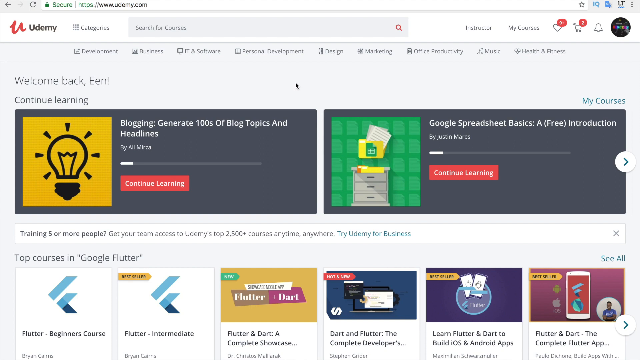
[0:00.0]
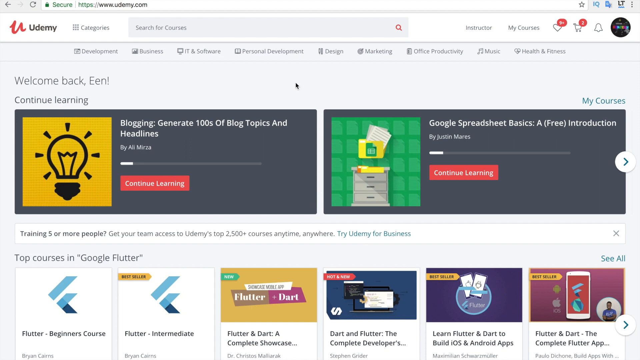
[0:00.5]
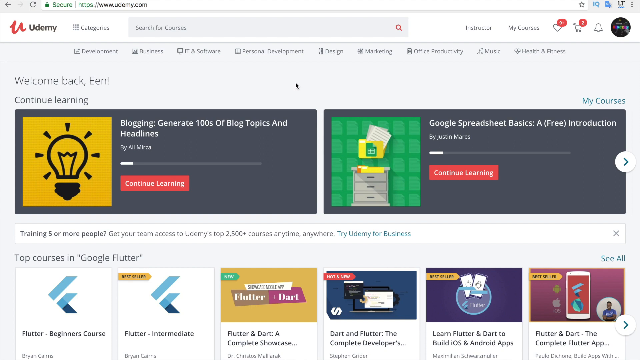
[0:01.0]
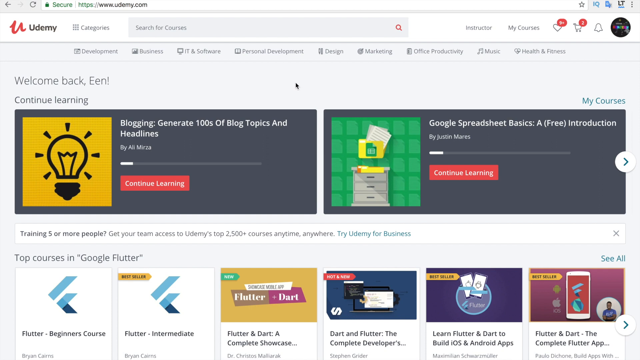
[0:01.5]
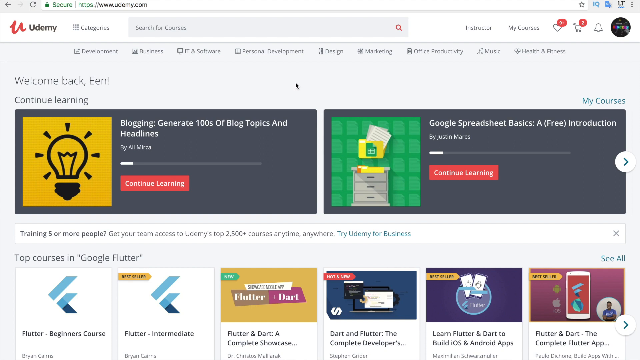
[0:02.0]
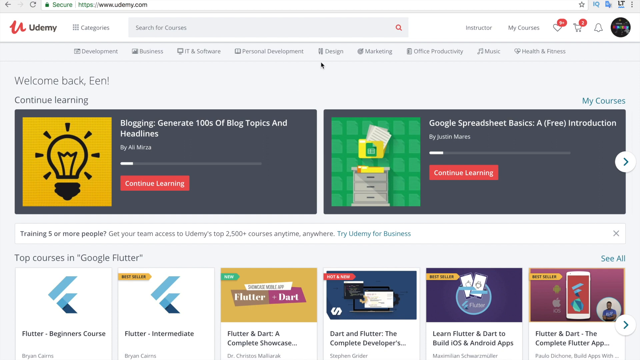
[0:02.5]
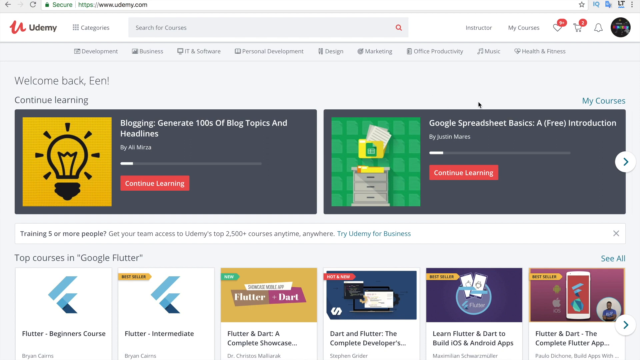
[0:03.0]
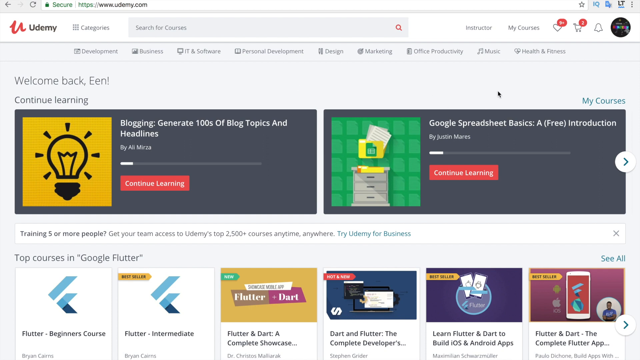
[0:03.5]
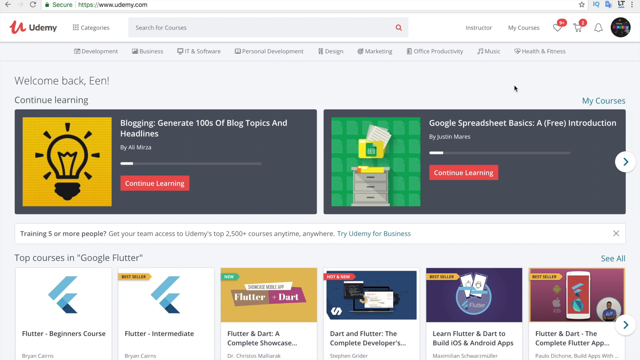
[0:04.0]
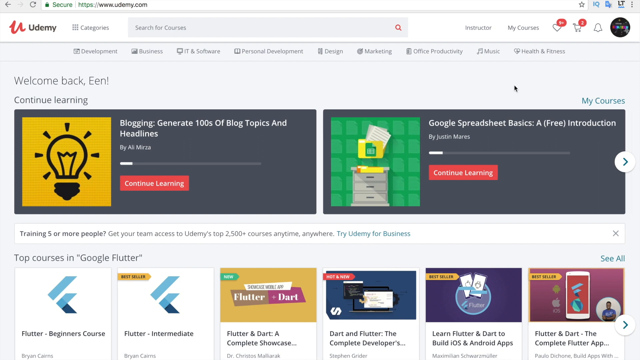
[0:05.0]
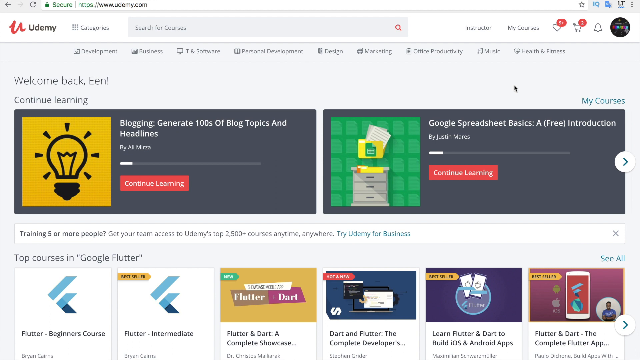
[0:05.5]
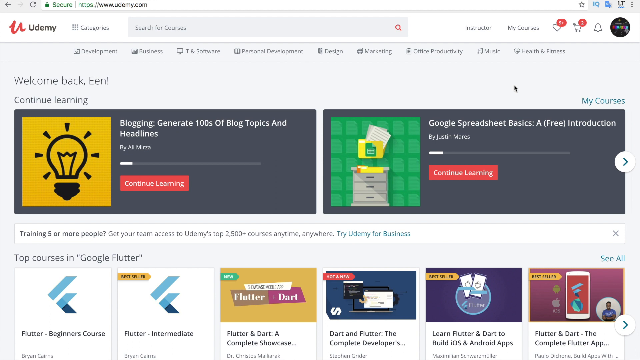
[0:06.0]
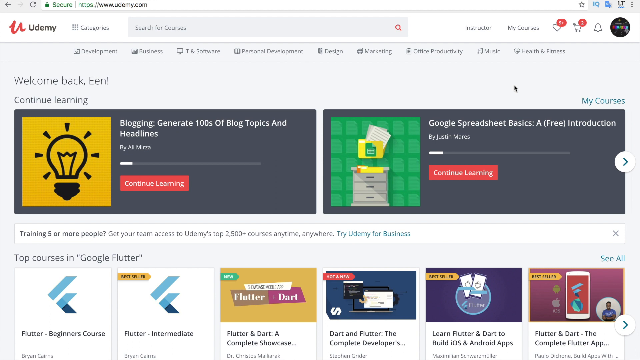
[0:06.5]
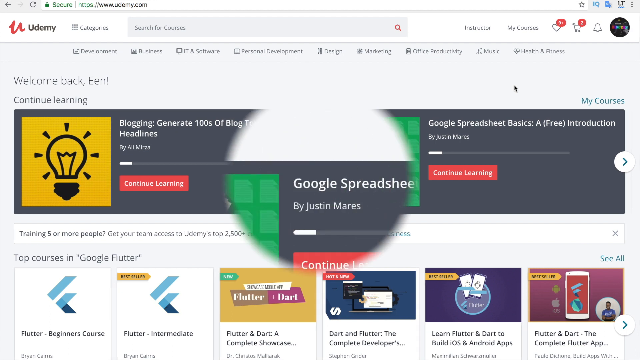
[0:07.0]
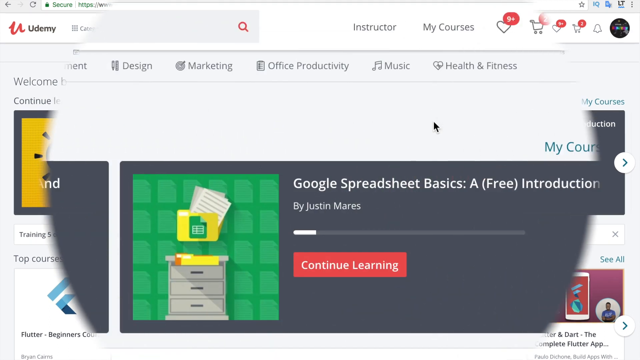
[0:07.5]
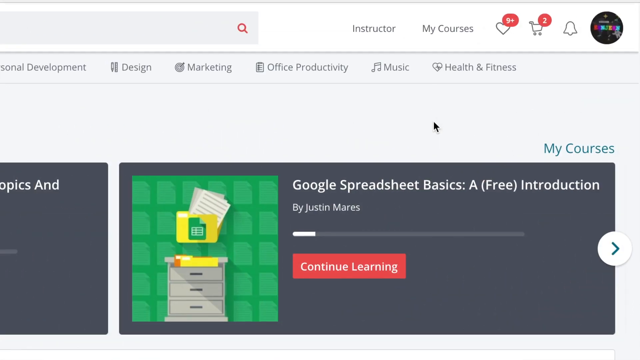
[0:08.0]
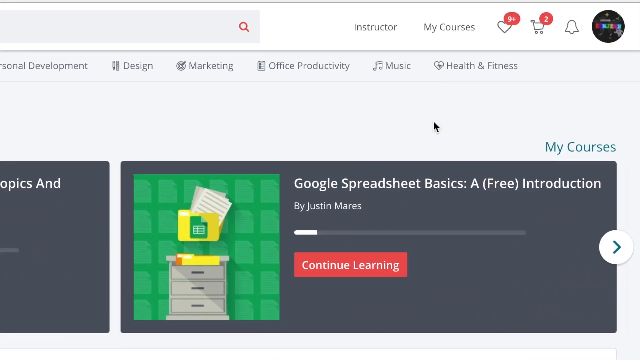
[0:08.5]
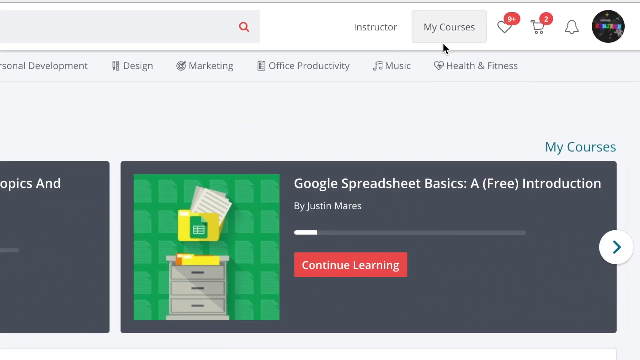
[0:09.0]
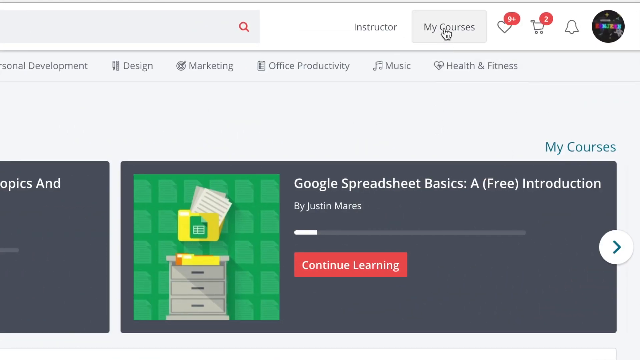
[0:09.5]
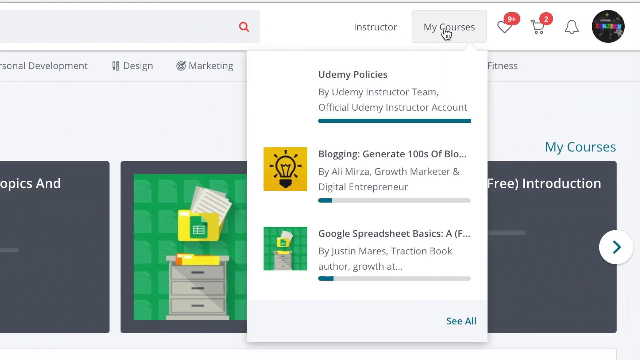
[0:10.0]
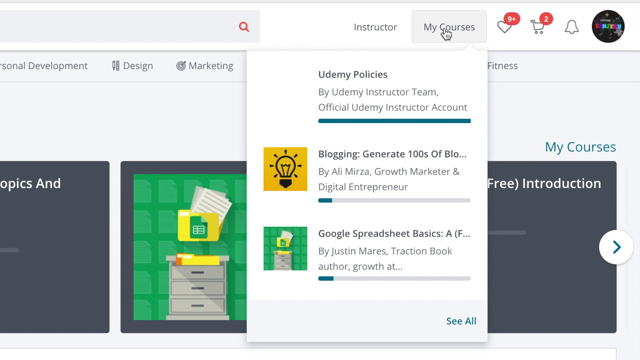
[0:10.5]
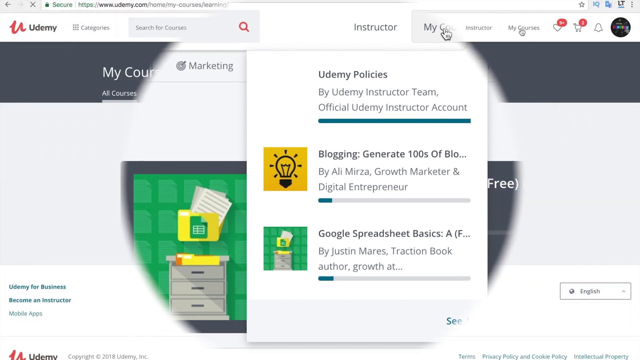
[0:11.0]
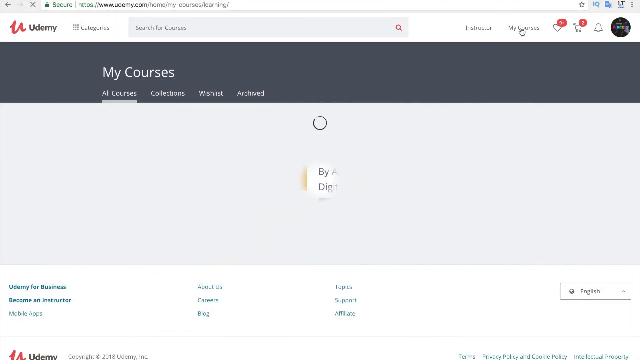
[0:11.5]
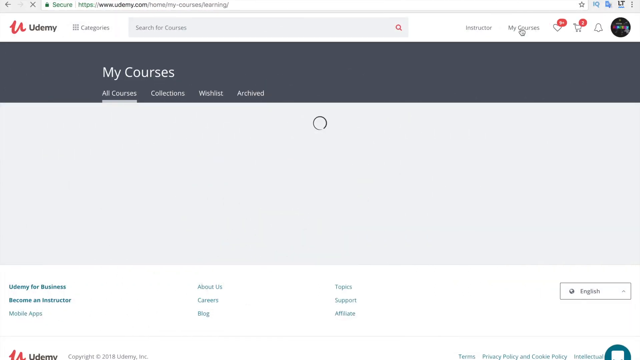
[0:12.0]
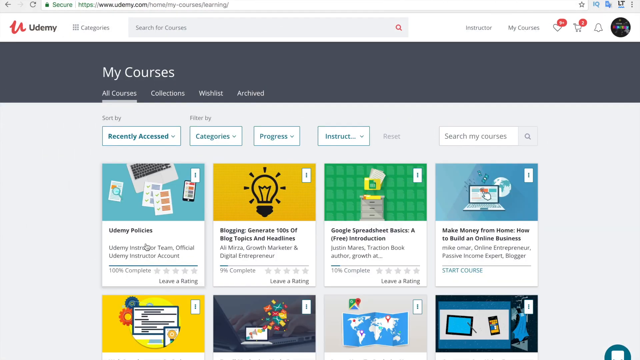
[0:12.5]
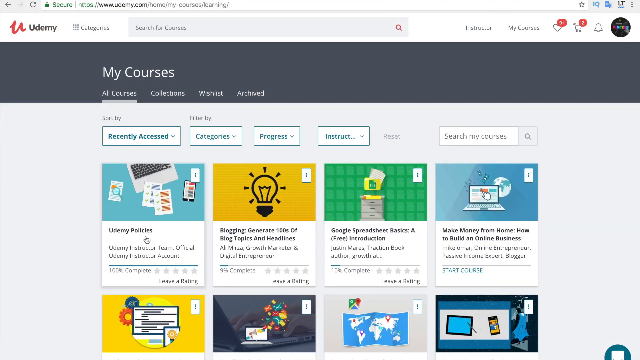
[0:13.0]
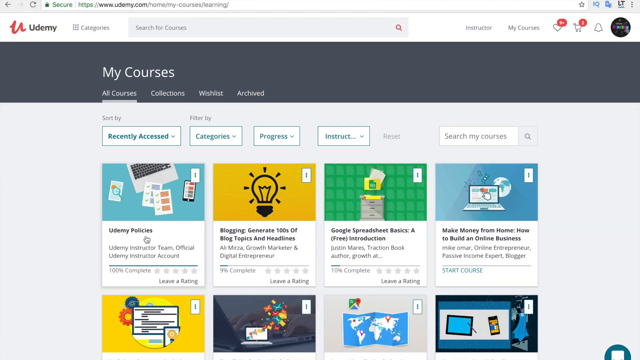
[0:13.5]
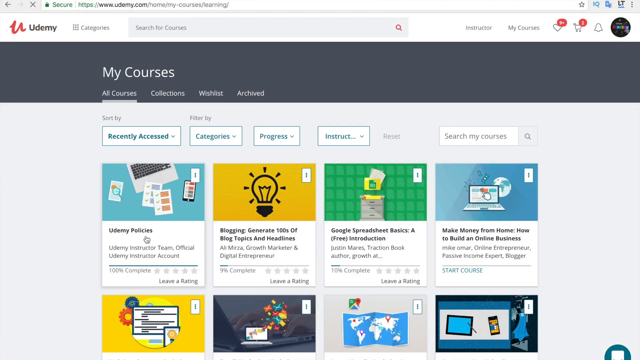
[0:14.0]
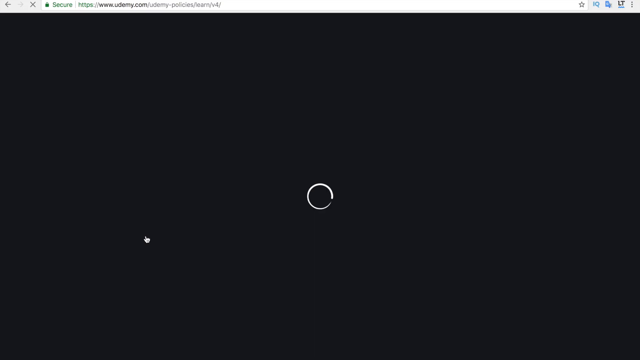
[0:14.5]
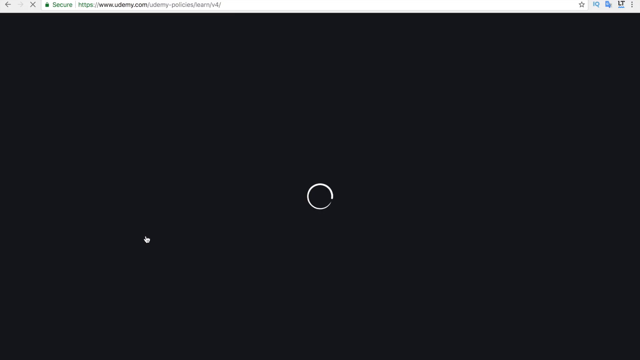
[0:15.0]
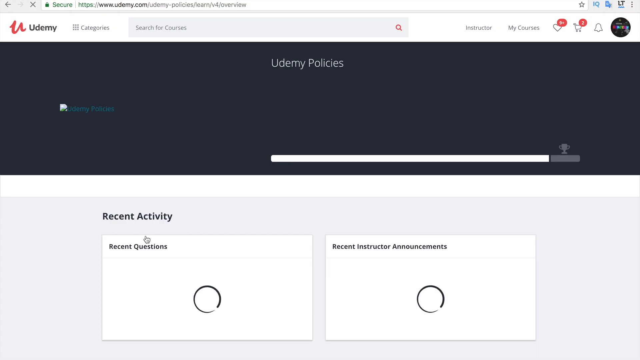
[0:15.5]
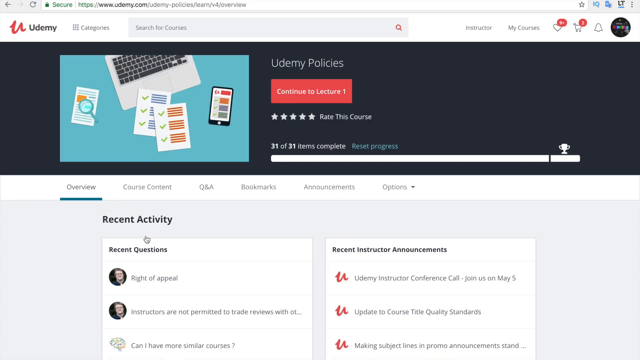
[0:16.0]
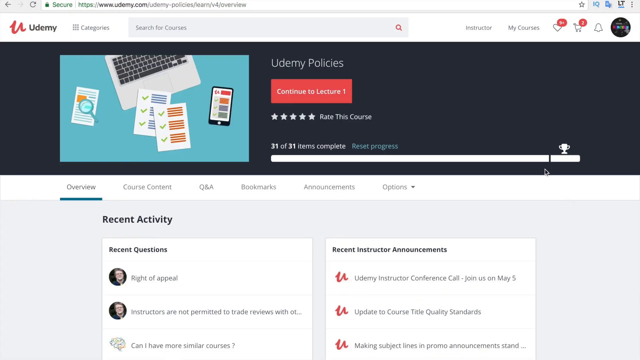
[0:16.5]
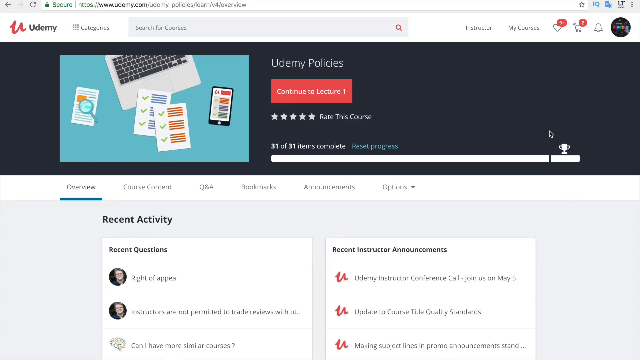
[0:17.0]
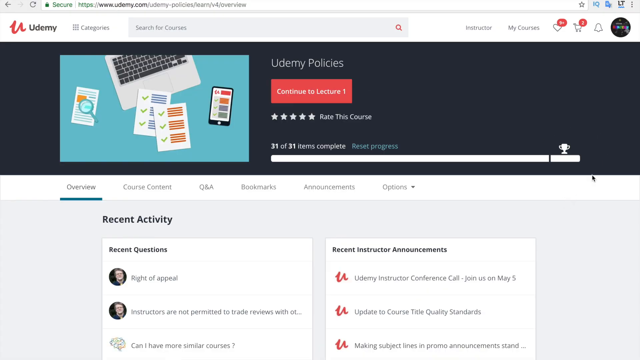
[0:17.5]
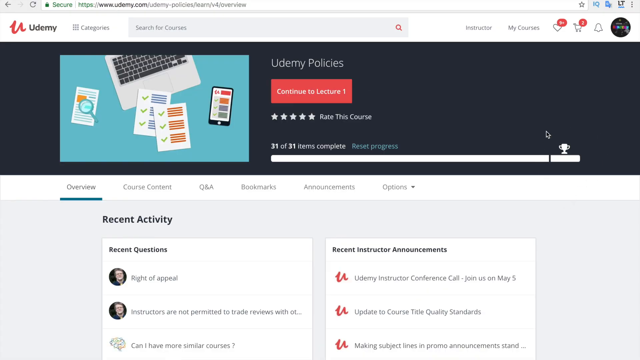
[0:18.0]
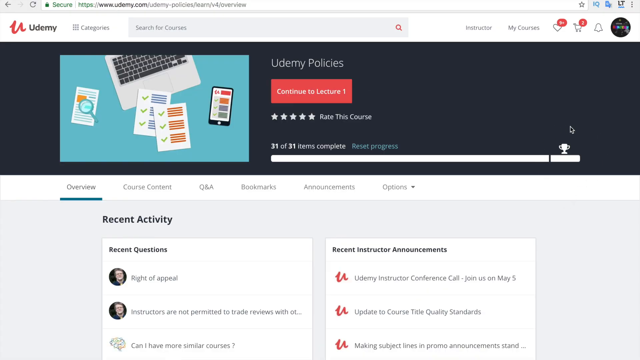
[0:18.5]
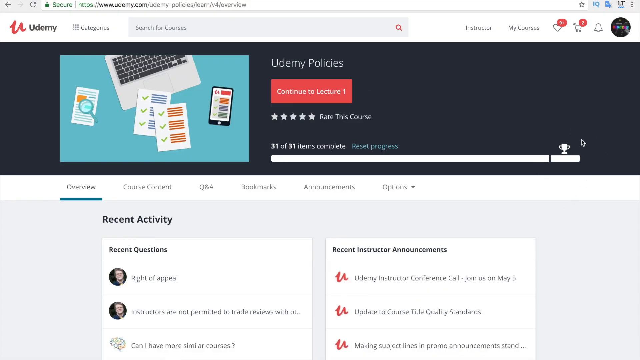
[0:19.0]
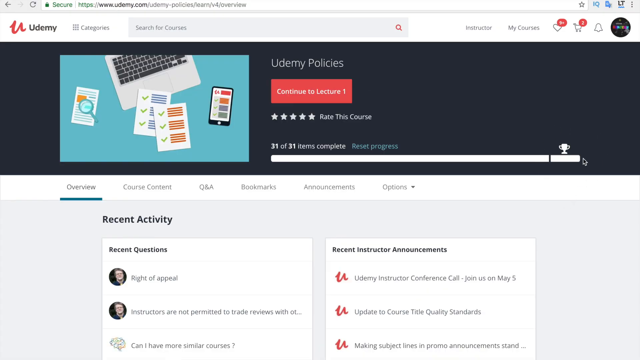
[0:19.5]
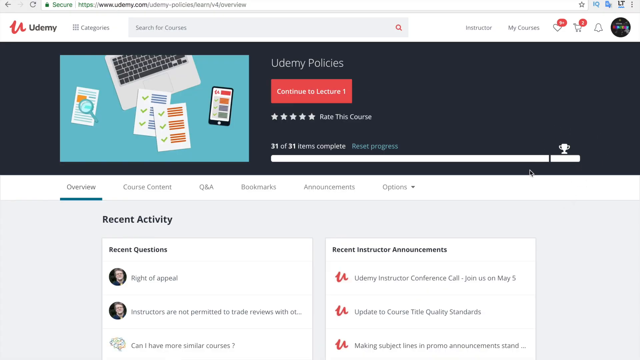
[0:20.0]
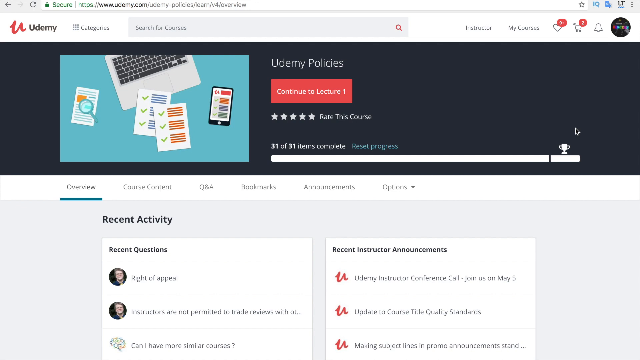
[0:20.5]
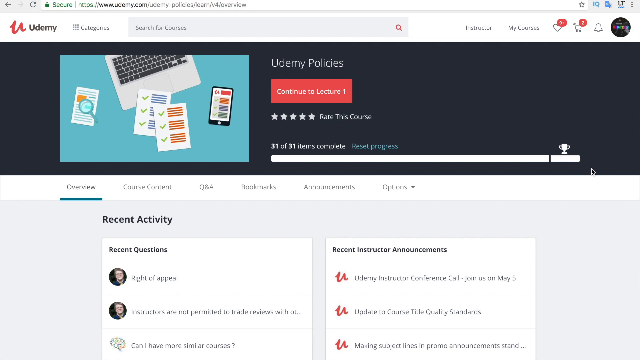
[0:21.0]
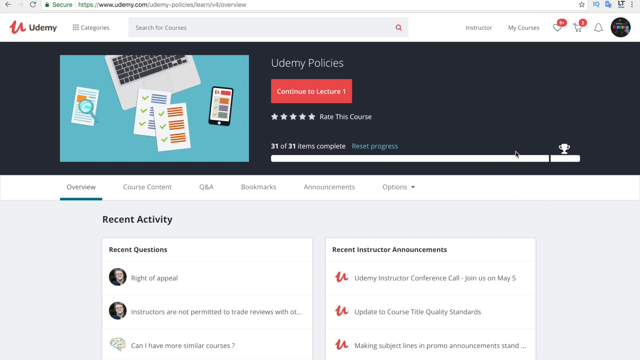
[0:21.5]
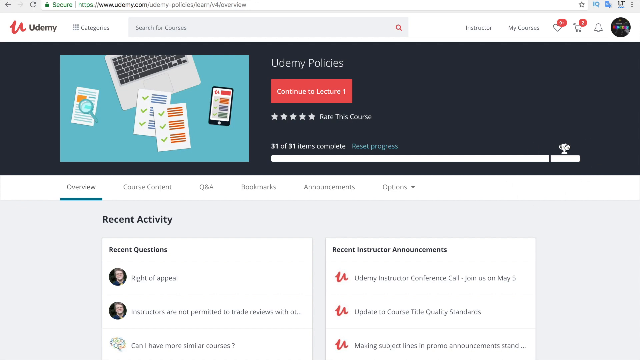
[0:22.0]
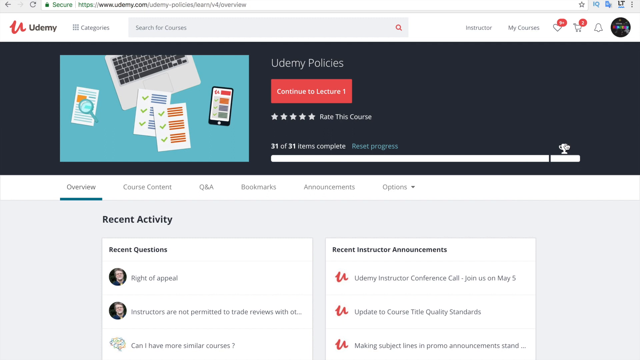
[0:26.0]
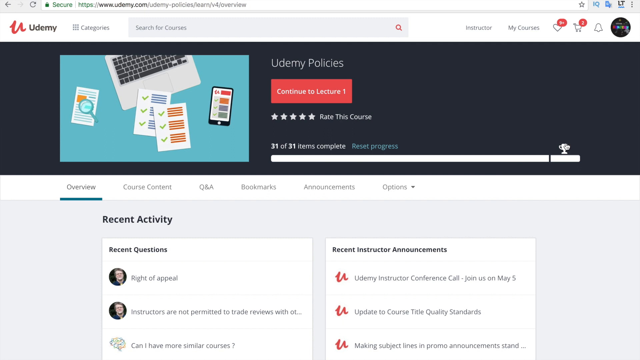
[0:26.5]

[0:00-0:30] A webpage for Udemy courses shows several thumbnails. At the top are two large thumbnails, one for a blogging course and one for a Google Spreadsheet Basics course, under the headline "Continue Learning." The user, Een, appears to have been taking these courses, as a small progress bar is visible on each of those blurbs. At the bottom are six more thumbnails for top courses in Google Flutter. A black cursor hovers around the top of the page and clicks on the My Courses tab. A drop-down menu shows three different options, and after a click a new My Courses page appears. The cursor hovers over and clicks the far left top blurb, Udemy Policies. A black screen with a loading icon briefly appears, followed by the Udemy Policies page, which shows recent activity. The cursor then hovers over the top right corner of a trophy icon, which is above a progress bar reading "31 of 31 items complete."